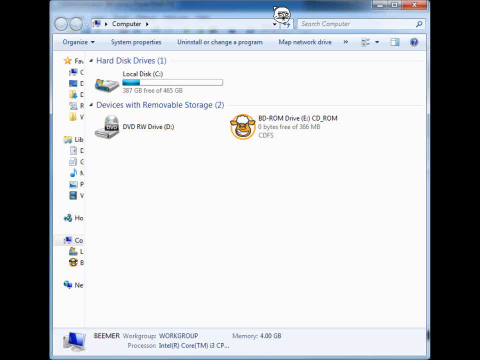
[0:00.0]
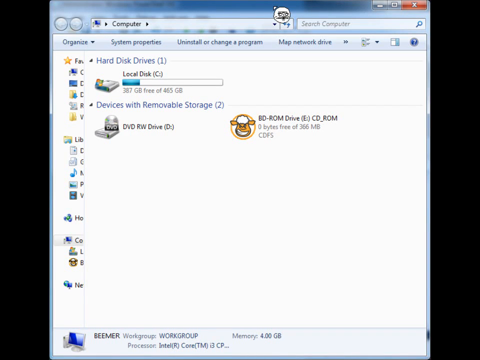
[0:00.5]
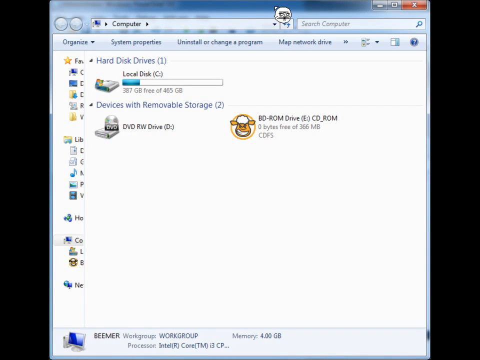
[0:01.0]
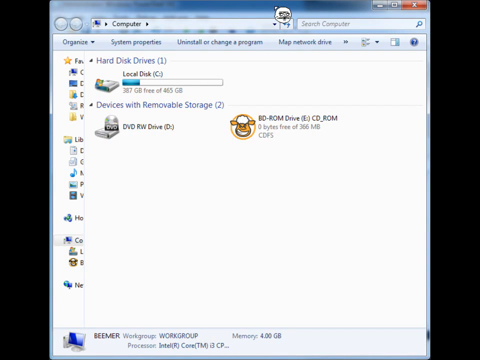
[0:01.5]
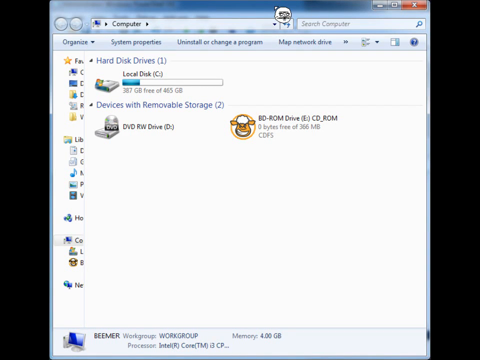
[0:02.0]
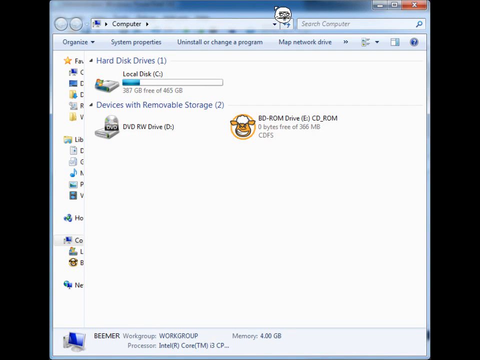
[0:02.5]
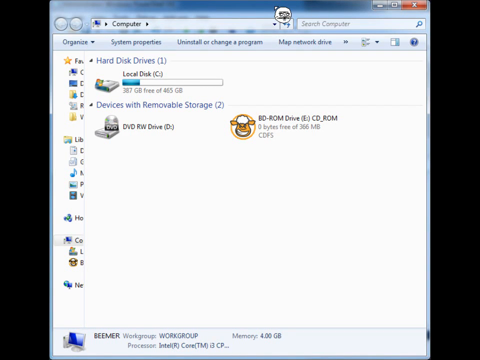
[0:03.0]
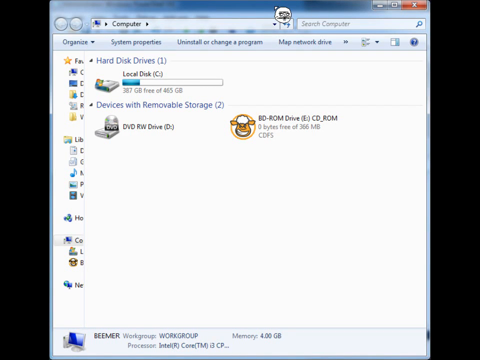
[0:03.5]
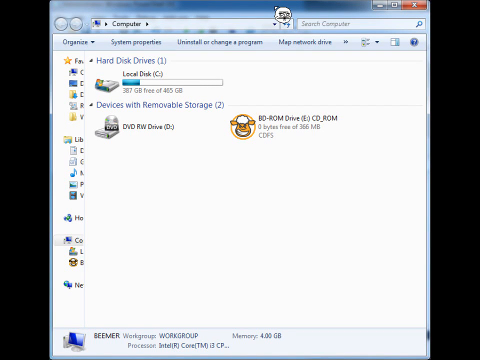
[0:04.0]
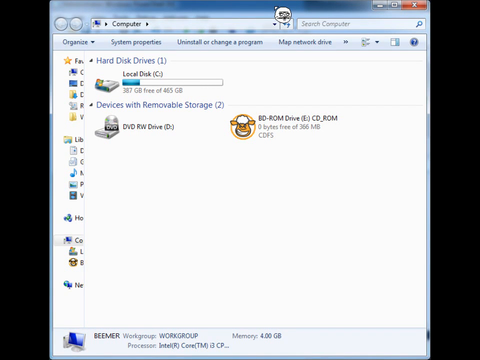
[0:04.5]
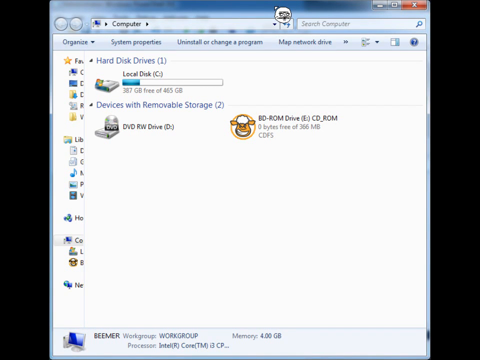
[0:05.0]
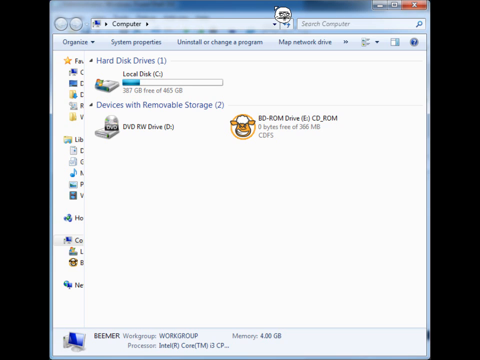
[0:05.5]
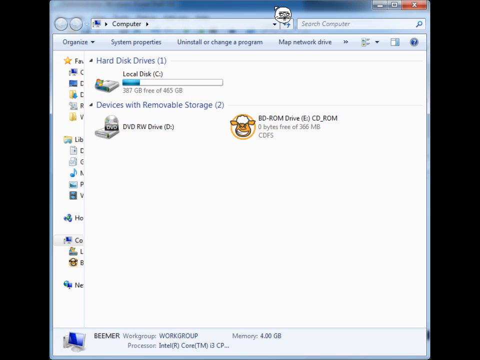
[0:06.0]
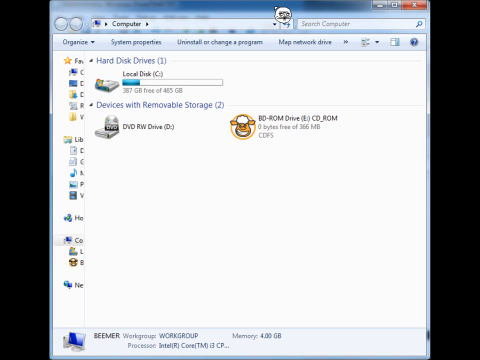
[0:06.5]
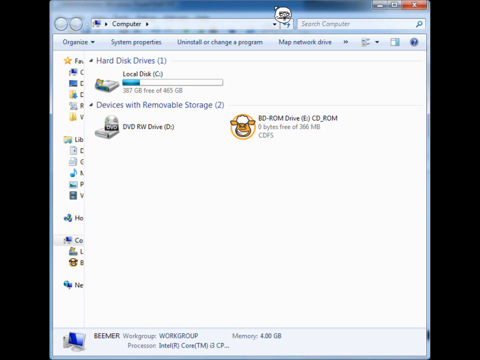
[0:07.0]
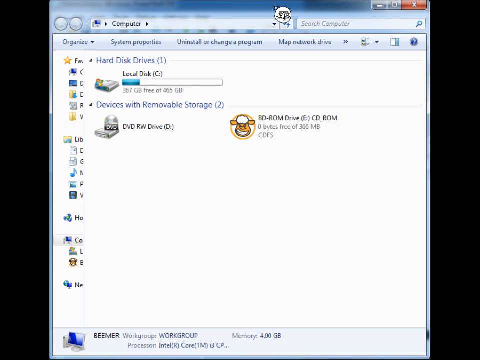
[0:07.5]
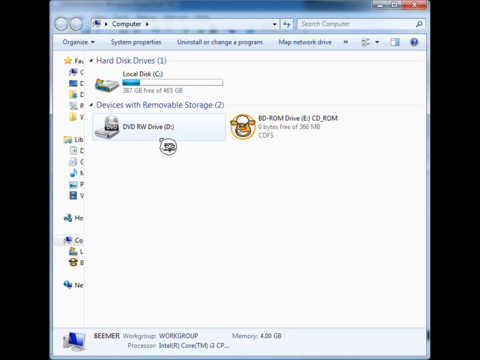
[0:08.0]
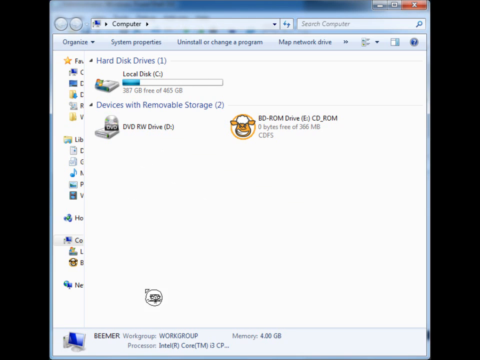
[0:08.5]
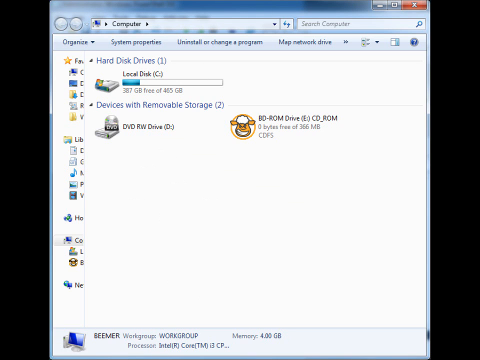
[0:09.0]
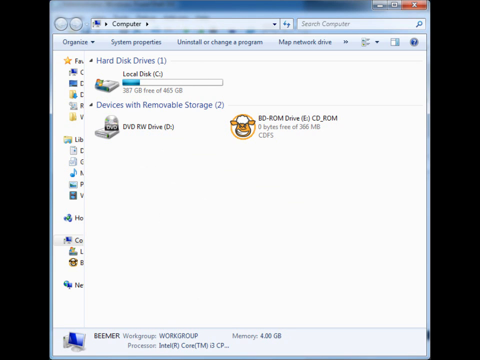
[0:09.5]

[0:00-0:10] A screenshot of a Windows computer shows the connected storage devices. There appears to be one local disk drive, a hard disk, with 387 gigabytes free out of 465 gigabytes total capacity. A CD-ROM drive and a DVD read and write drive are also connected. The cursor, exaggerated in size with a special icon, appears to be near the top, near the address window of the browser, and is moved down quickly in one motion. In the last second, the screen appears to switch to a Windows Administrator PowerShell.